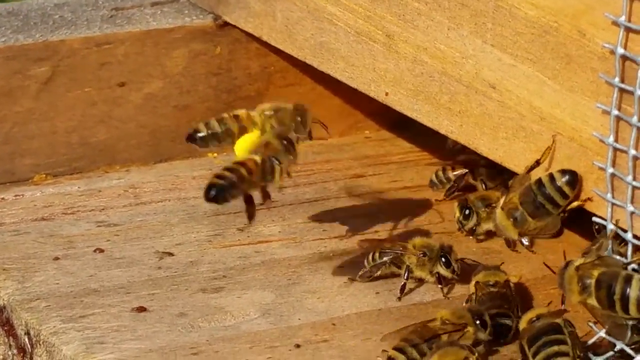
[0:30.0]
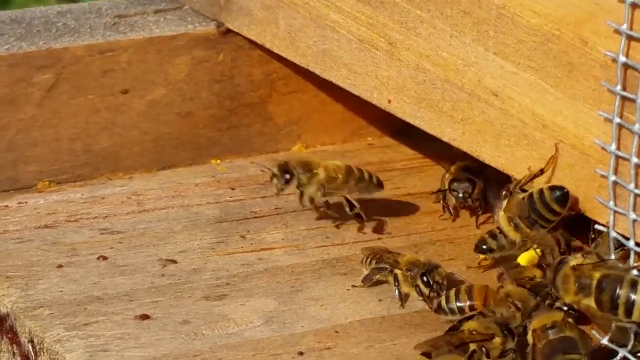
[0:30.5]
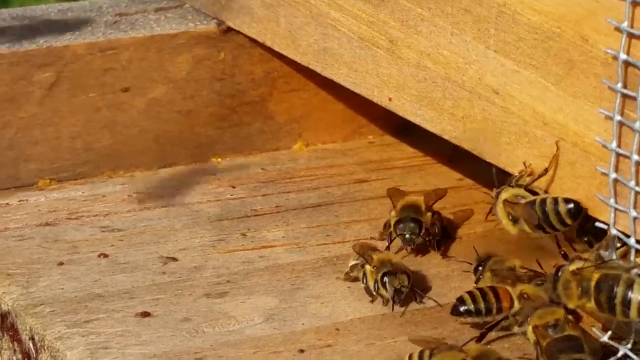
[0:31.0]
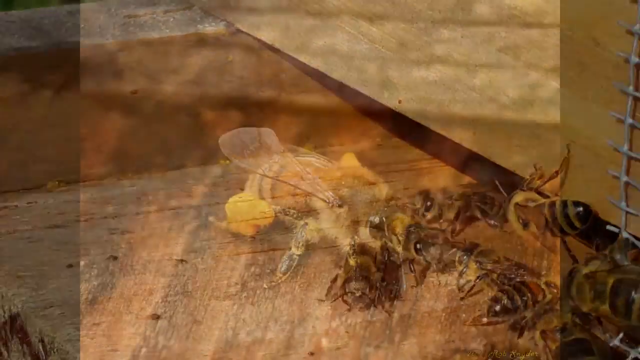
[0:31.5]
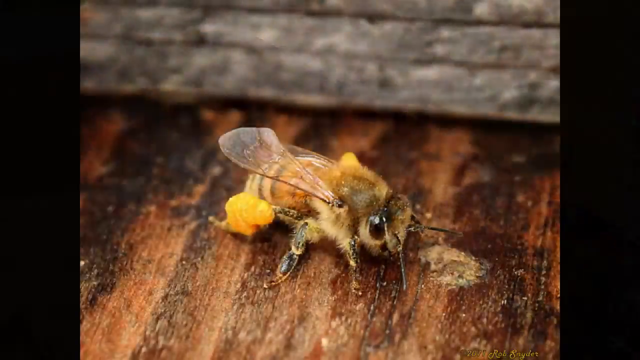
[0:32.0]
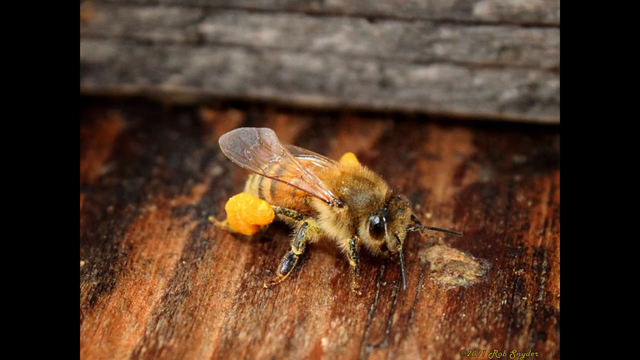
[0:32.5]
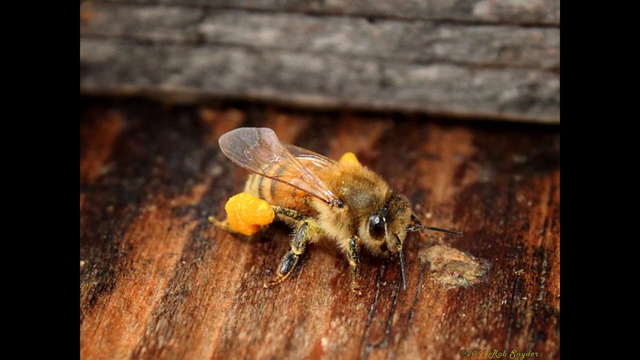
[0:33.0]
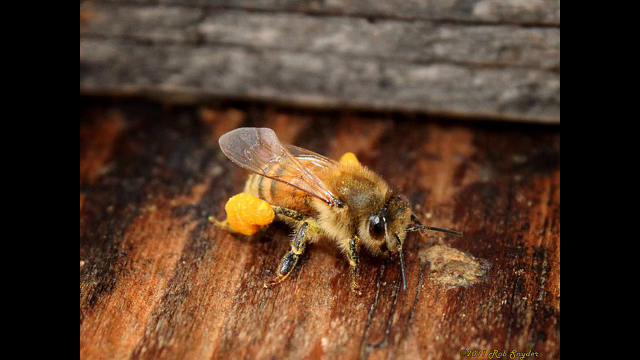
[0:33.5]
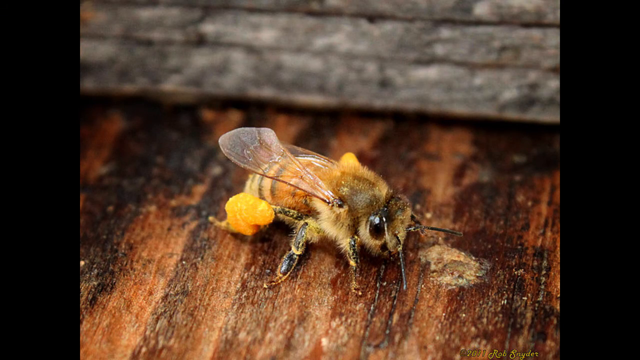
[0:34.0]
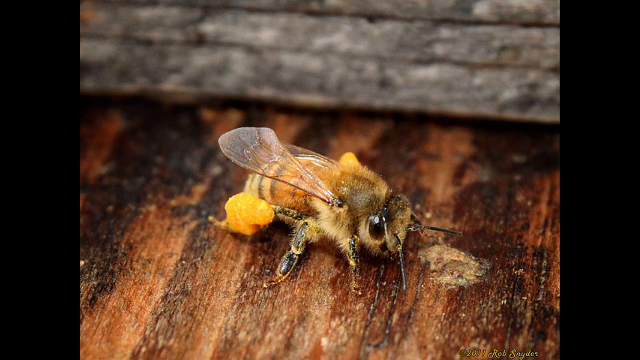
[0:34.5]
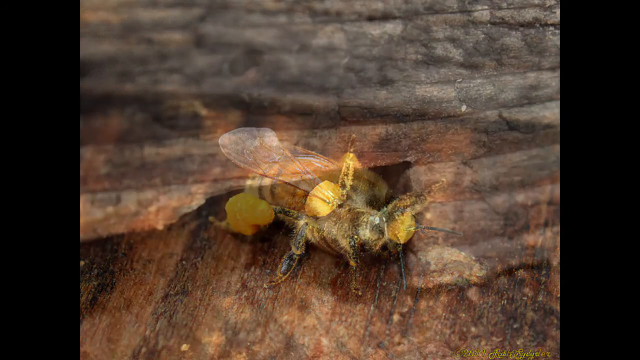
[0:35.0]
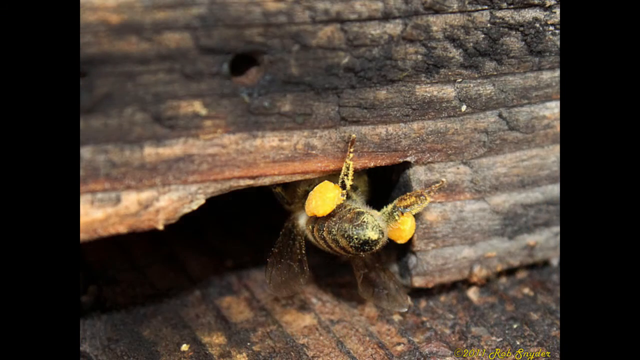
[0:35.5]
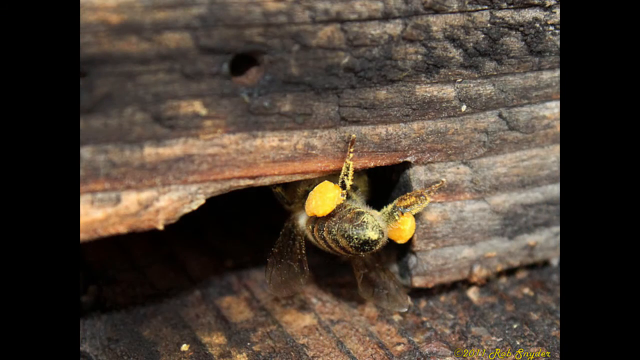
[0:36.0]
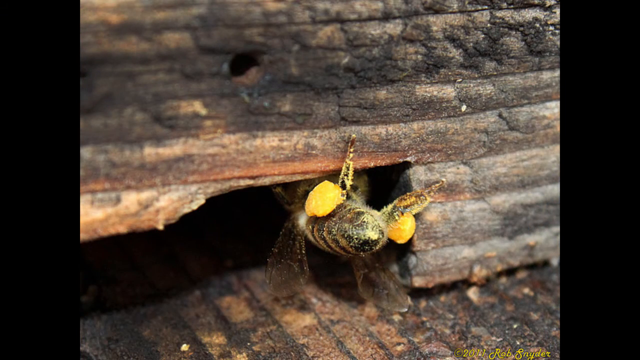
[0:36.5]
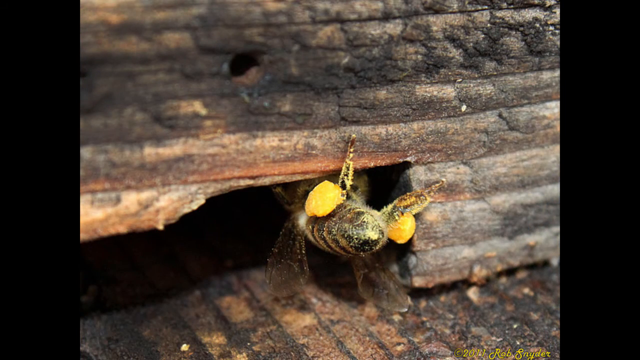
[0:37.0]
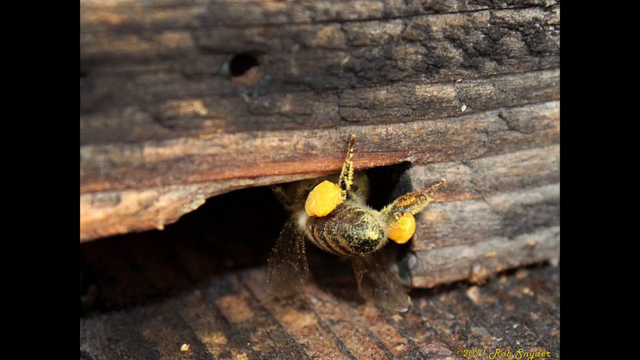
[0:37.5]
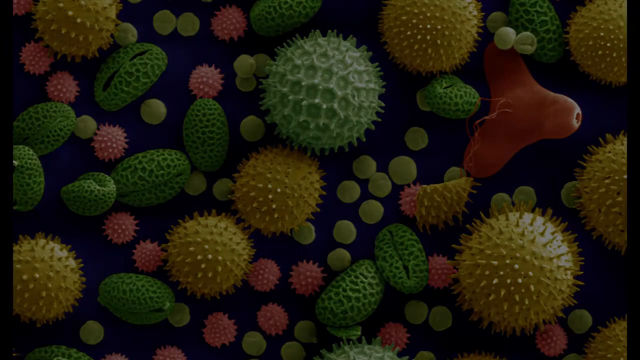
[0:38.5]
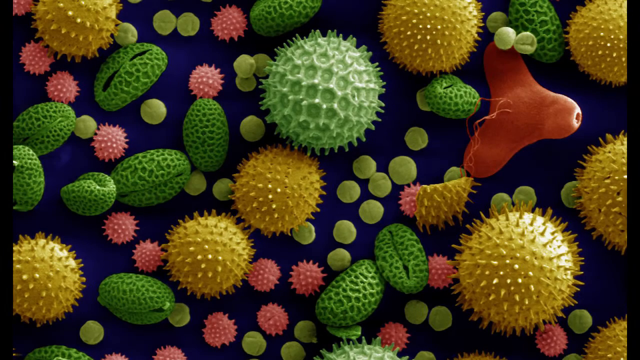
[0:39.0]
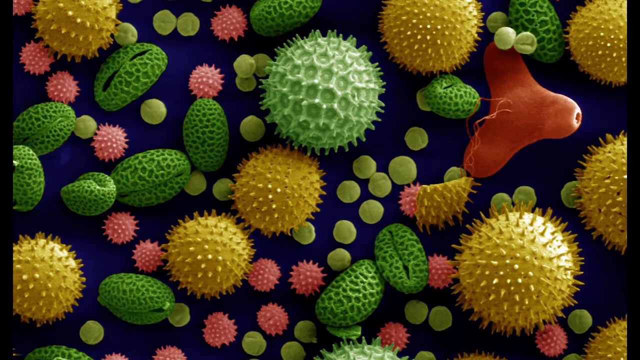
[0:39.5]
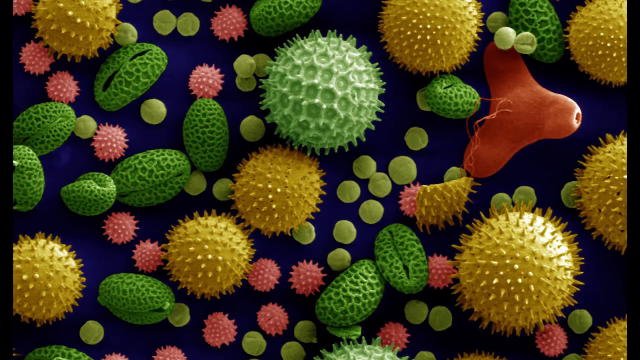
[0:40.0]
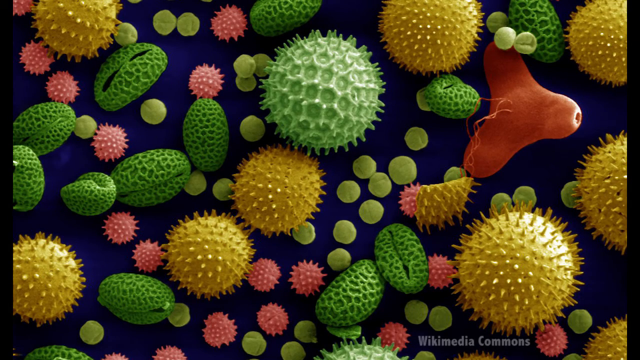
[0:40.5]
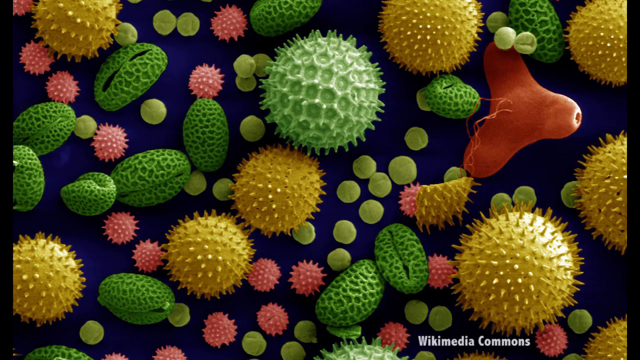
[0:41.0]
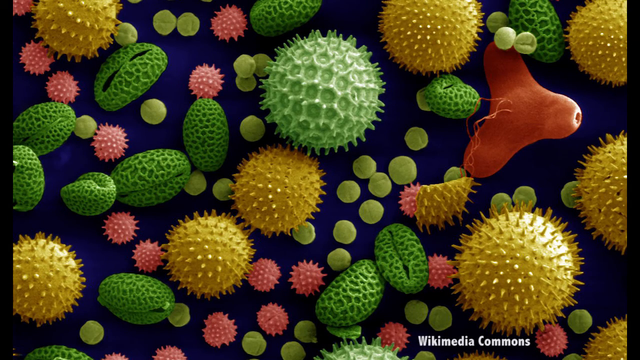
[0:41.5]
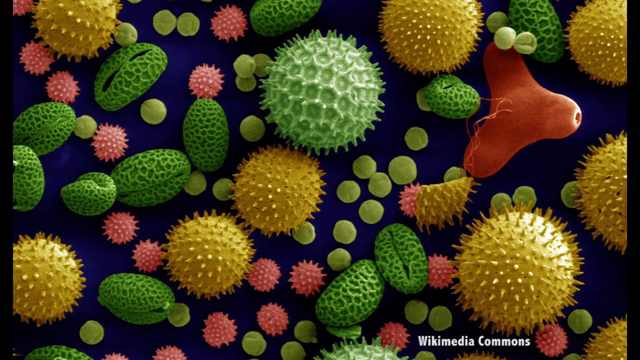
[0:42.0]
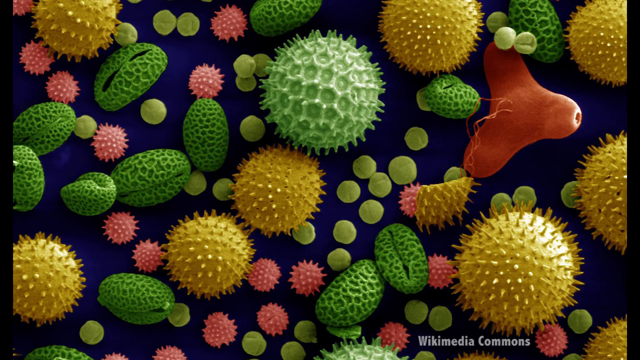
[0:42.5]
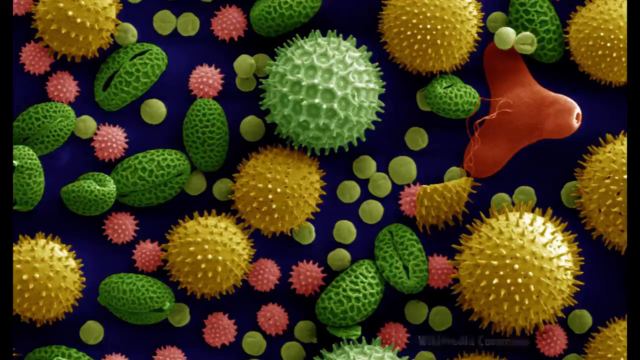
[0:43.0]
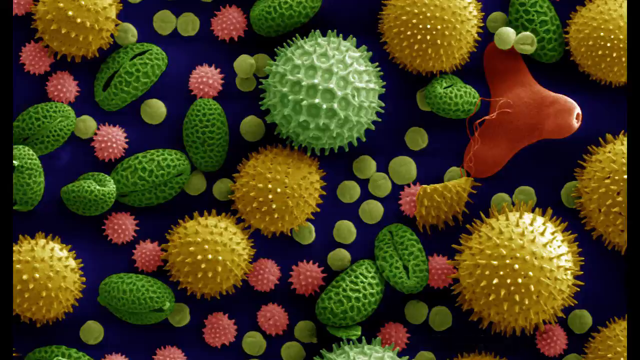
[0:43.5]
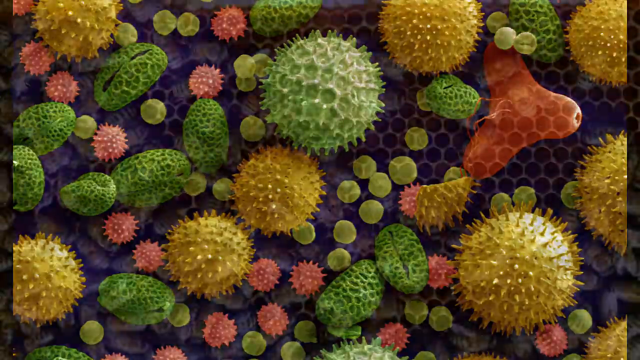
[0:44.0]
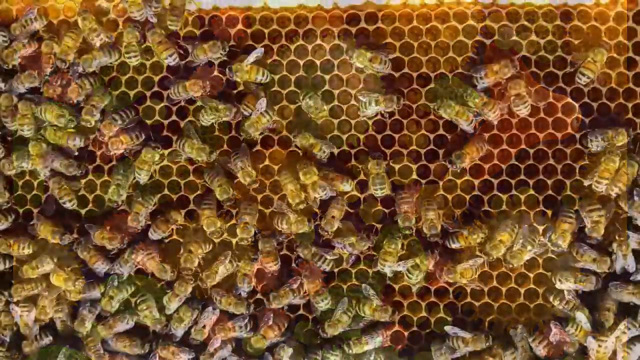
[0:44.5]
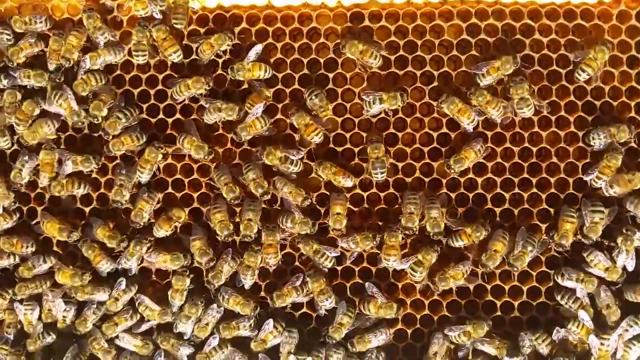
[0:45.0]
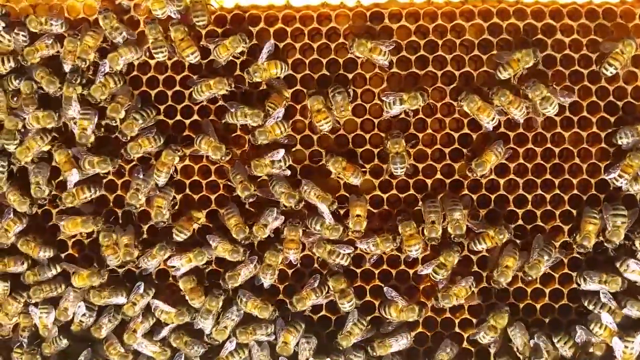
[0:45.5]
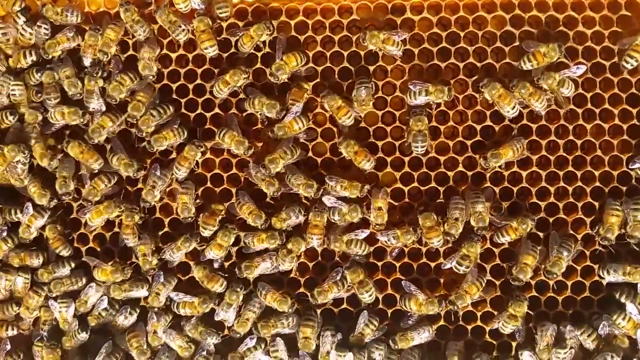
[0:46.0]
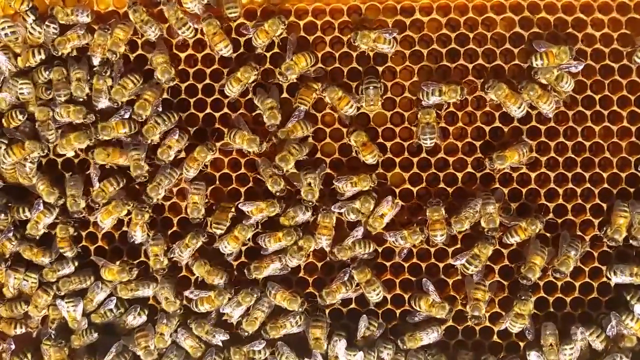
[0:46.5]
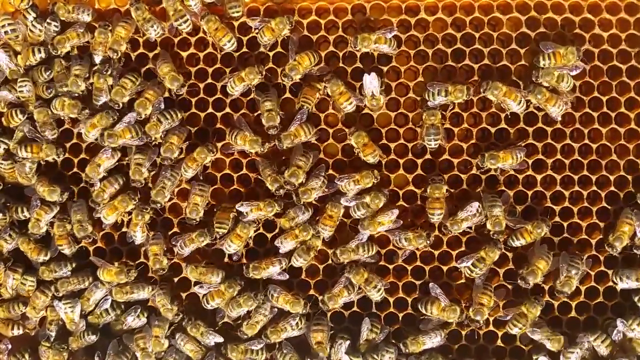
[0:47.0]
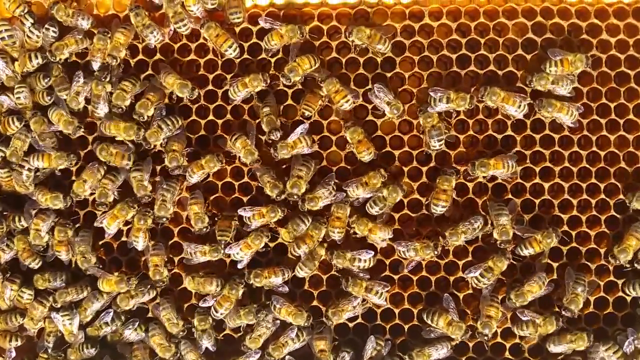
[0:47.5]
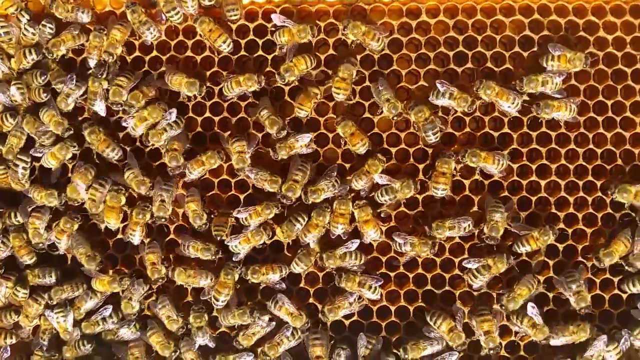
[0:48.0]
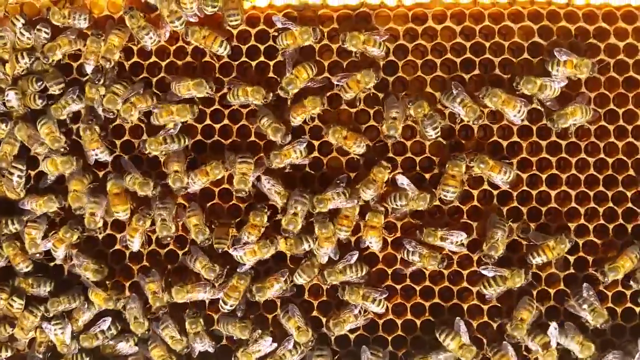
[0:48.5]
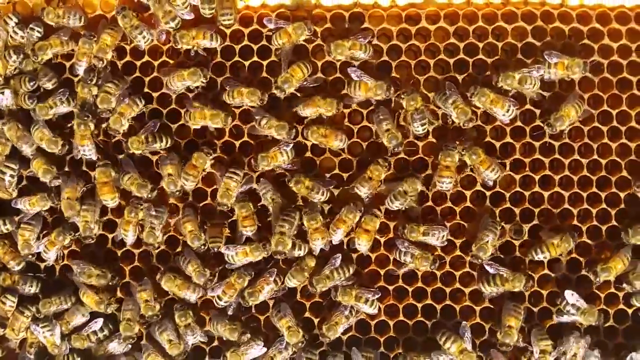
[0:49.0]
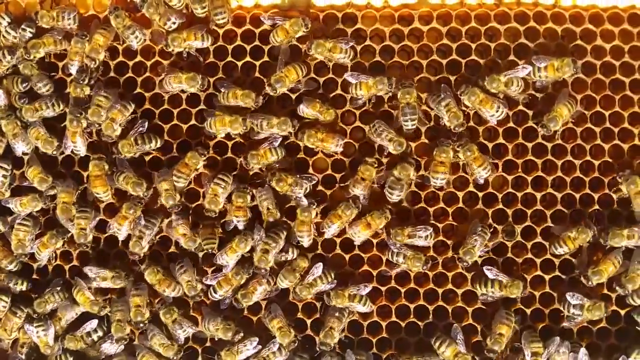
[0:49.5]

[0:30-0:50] Bees go into their nest. The image changes to a still photo of a bee that seems to have yellow appendages to its left and above its abdomen; its black eyes are visible, and it is standing on a brown material not unlike wood, facing right. Next, the same bee, with two bright yellow appendages on its abdomen, goes into a nest under a piece of wood. An illustration at a cellular level follows, showing various ovals, circles and bulbous shapes colored green, yellow and red. Then a view of many bees in a honeycomb appears, roughly 60 bees, all seemingly alive as they put honey in the comb. Finally, a still photo shows a bee with the yellow appendage next to other bees that lack it.